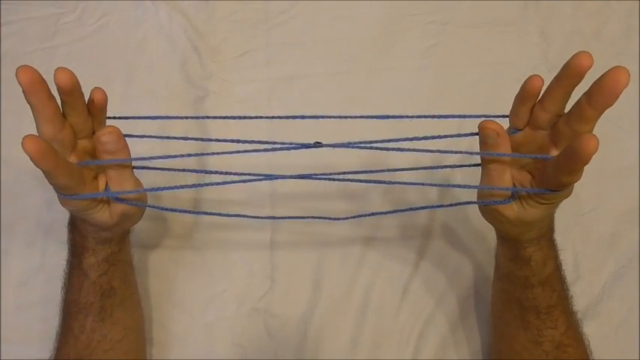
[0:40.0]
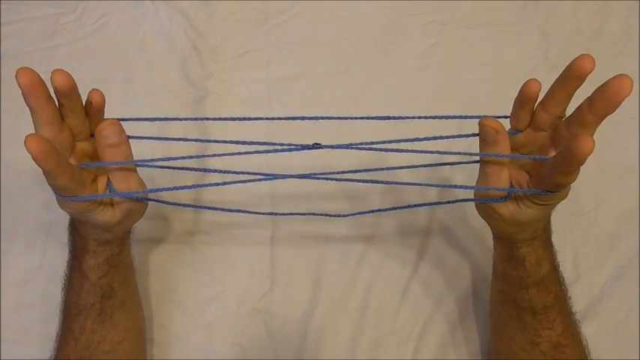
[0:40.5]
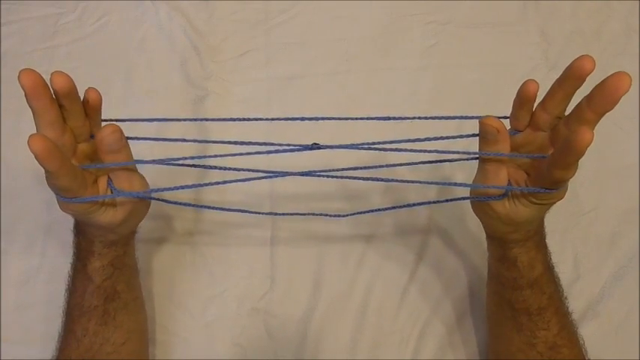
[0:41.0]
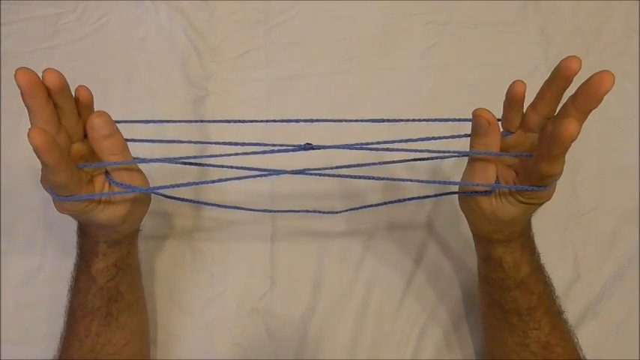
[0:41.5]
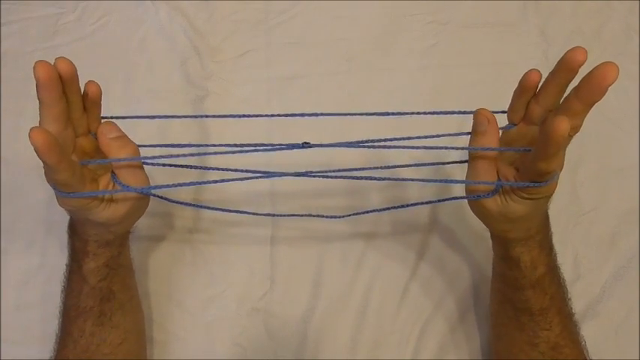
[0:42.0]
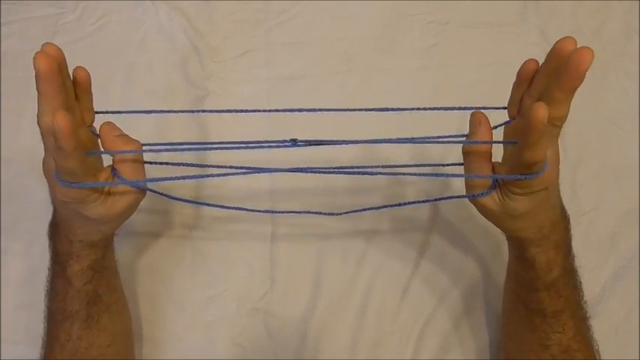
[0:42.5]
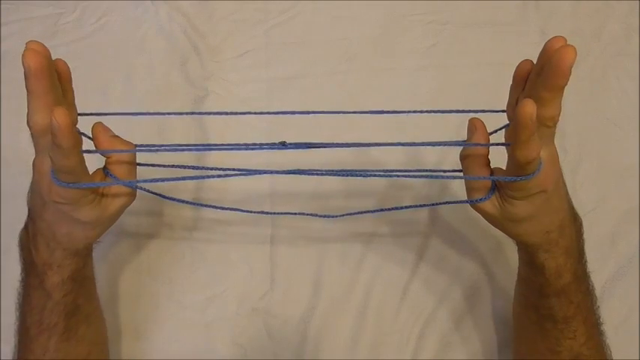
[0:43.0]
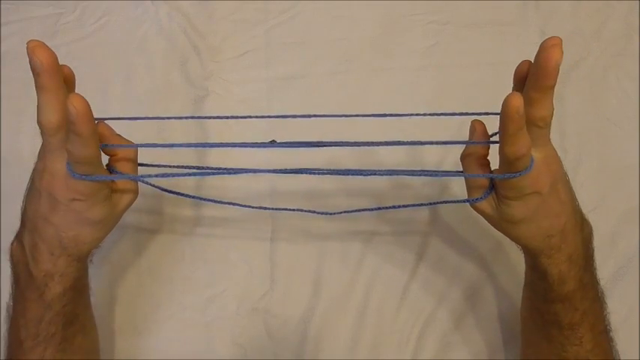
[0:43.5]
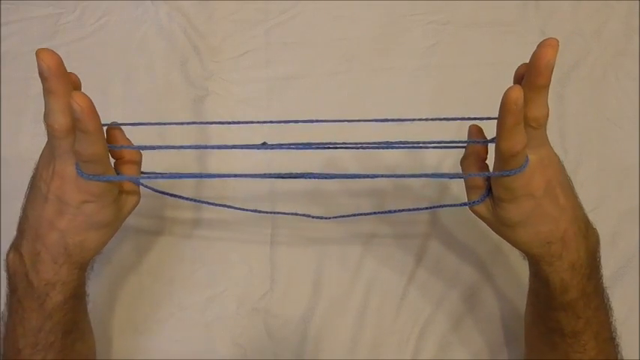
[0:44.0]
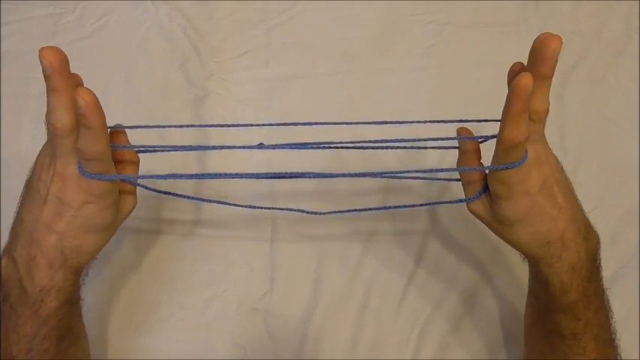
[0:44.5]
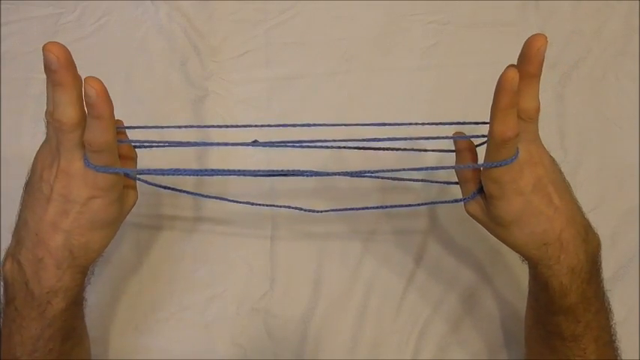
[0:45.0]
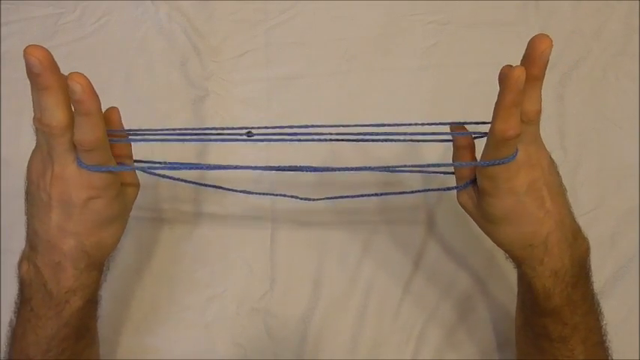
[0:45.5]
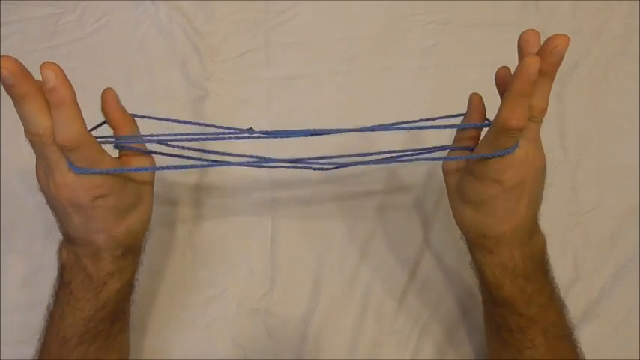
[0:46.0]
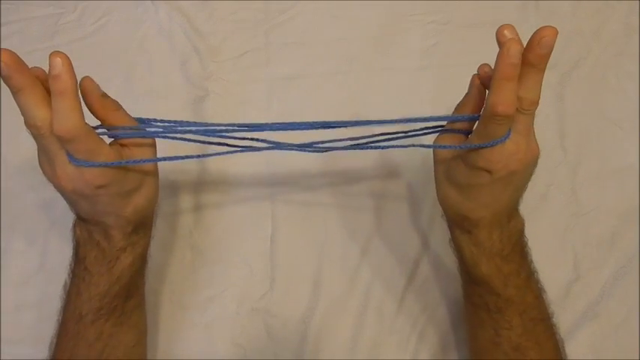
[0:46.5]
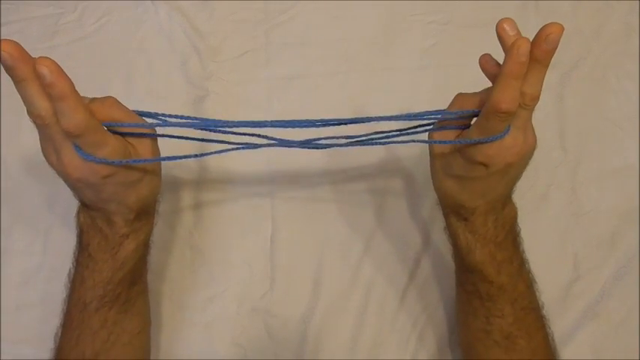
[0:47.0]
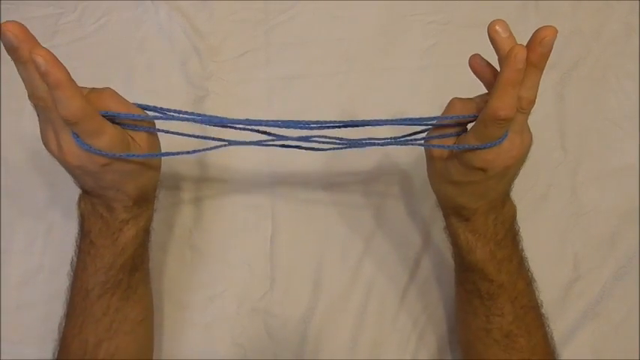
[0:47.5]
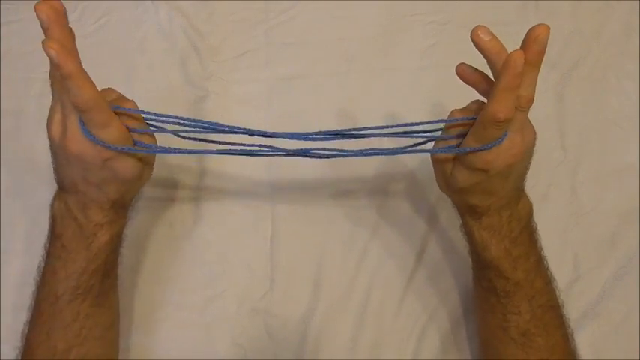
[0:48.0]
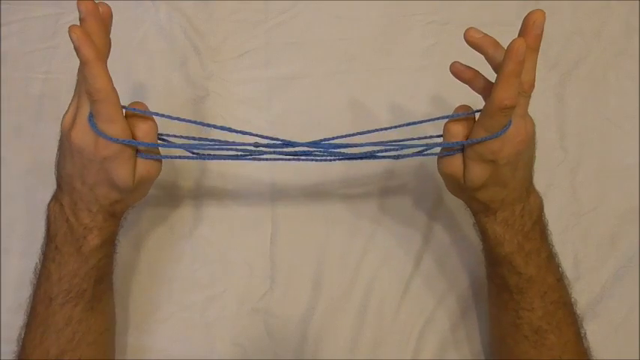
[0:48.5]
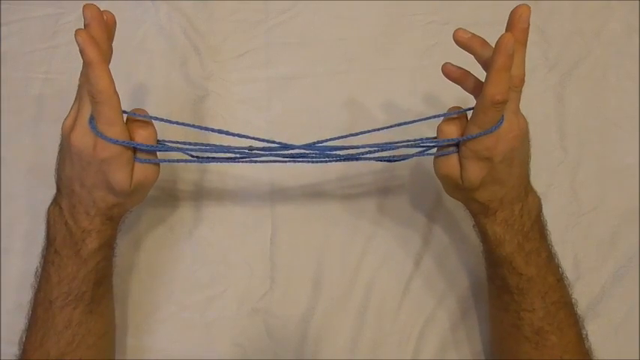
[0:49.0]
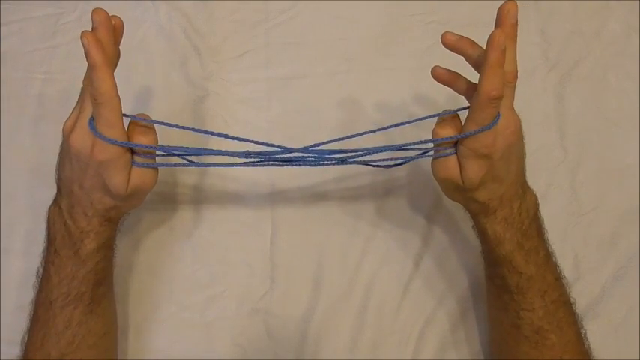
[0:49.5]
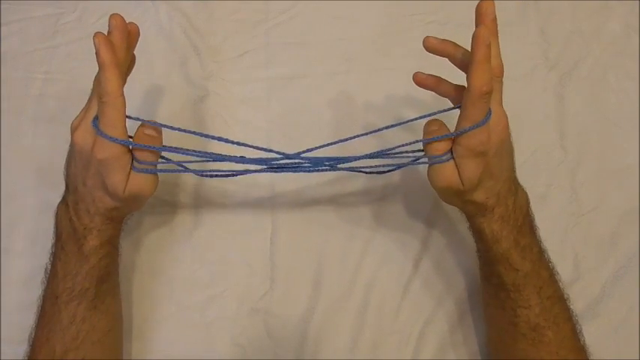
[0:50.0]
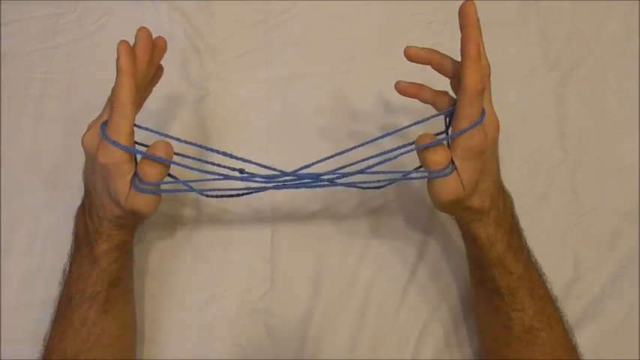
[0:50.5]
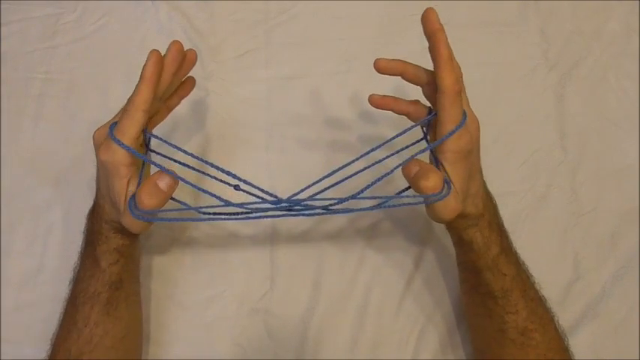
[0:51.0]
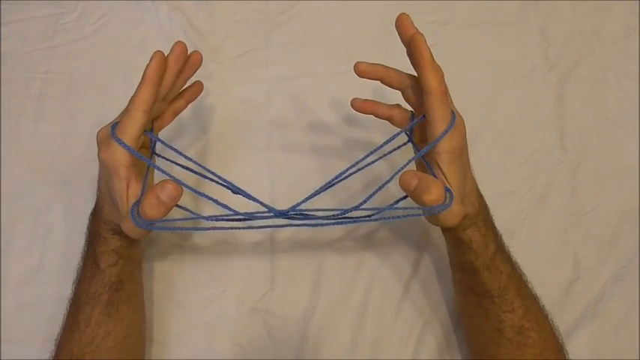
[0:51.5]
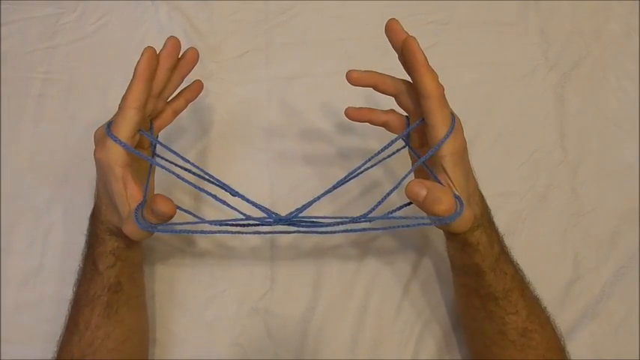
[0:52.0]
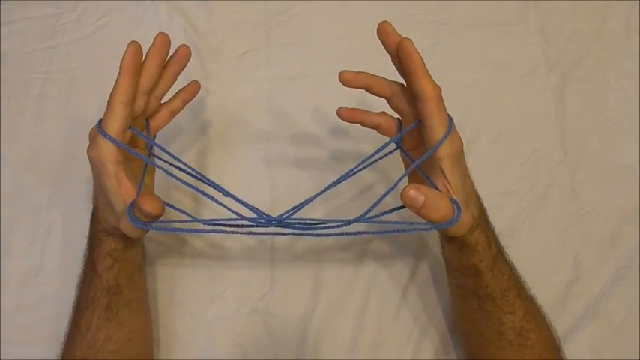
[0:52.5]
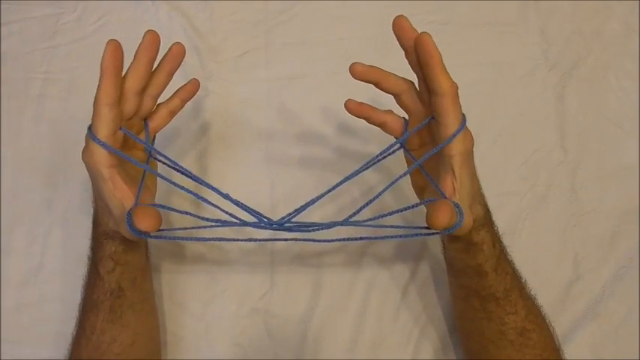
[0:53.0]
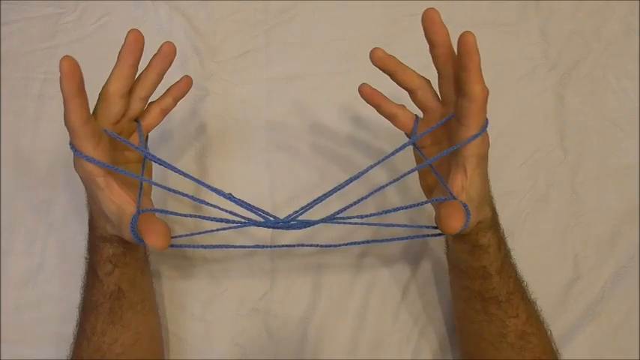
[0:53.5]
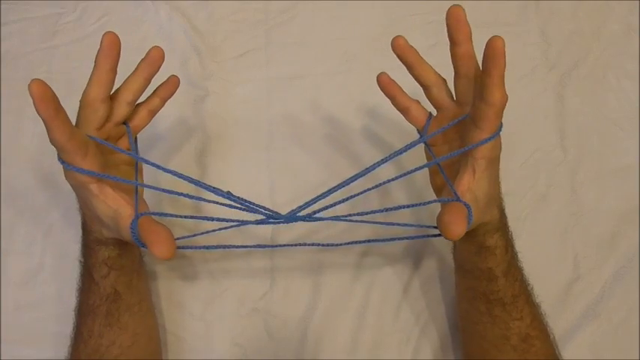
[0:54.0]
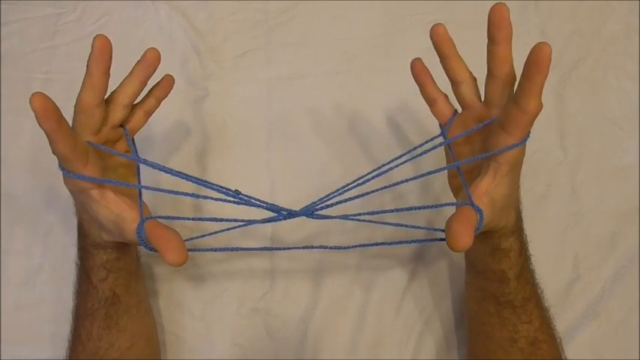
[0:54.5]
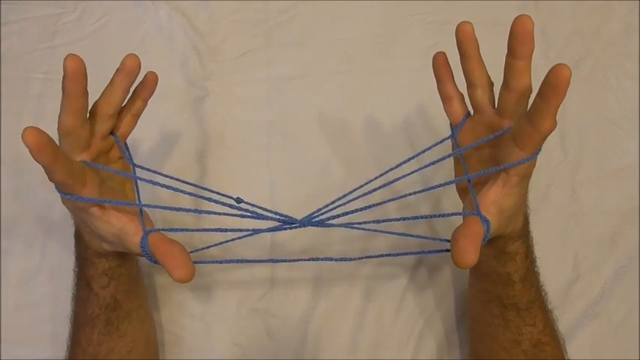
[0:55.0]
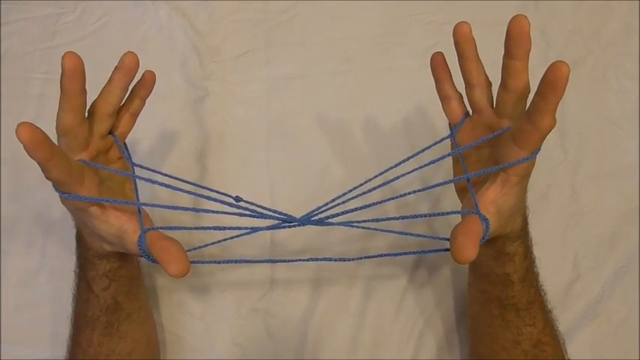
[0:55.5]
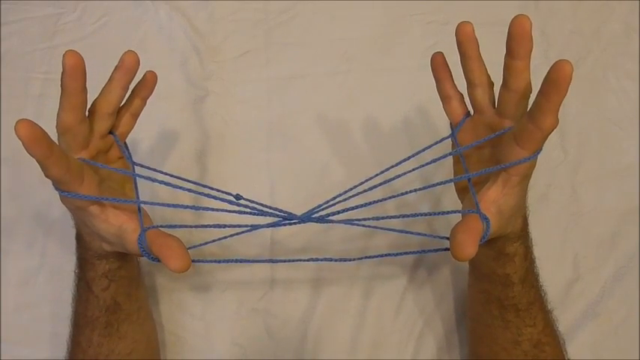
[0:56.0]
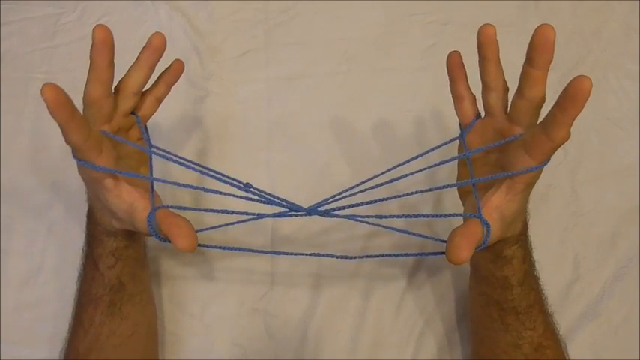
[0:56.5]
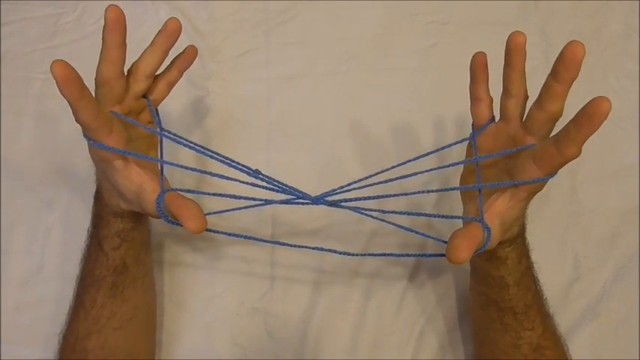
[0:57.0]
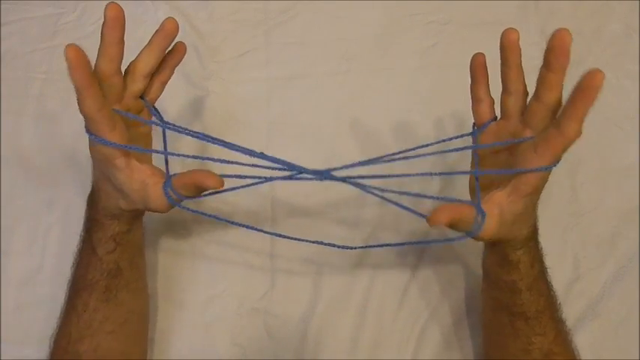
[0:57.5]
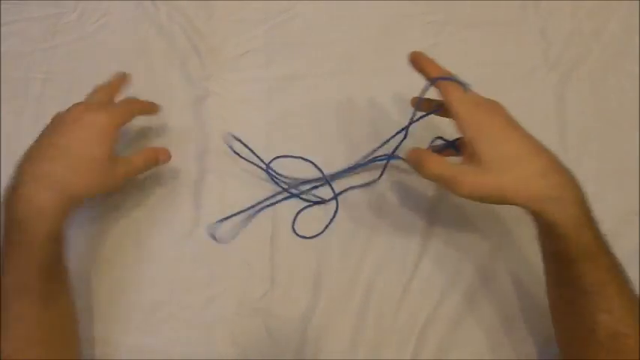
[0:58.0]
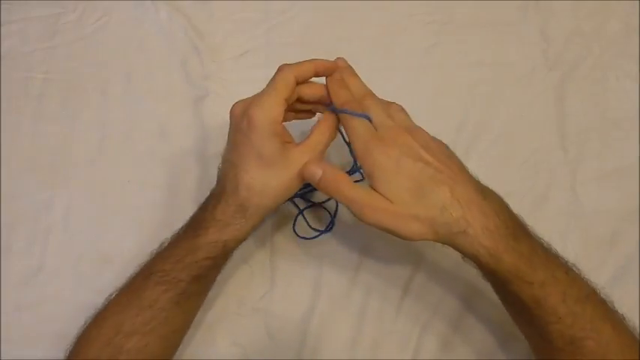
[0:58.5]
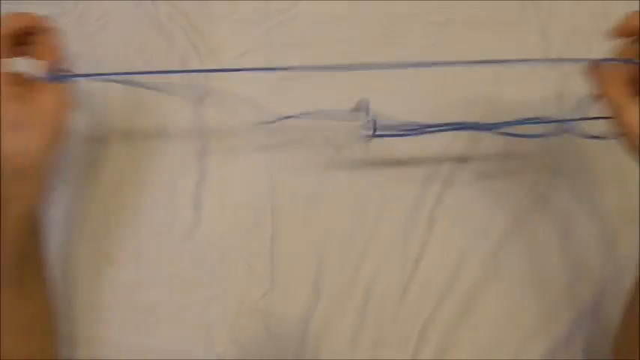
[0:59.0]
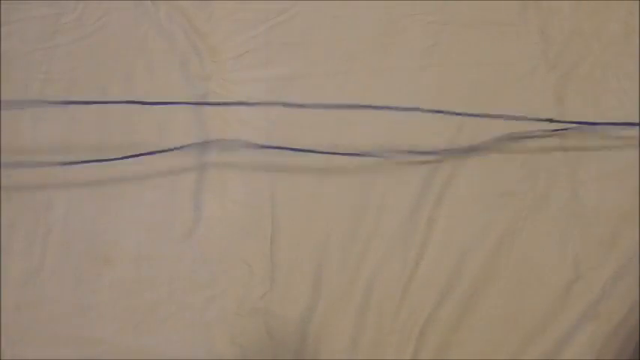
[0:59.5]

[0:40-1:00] The camera seems to have moved to more of a top view. The man holds his hands and stretches out the blue strings, moving his hands very slowly in an almost circular motion, curving them inwards. After this motion and tightening the string, he lets loose of the string and unravels it, then places the string down, almost on top of the table. He is possibly just showing the first basic step before undoing it.